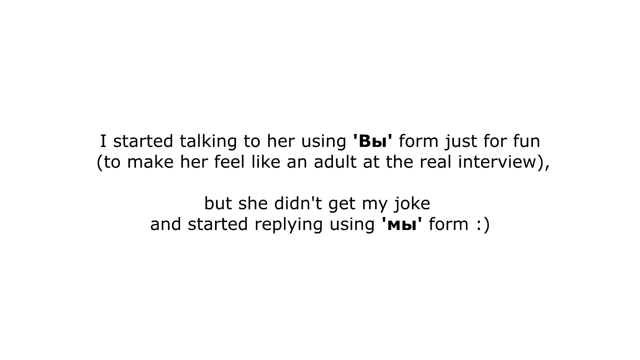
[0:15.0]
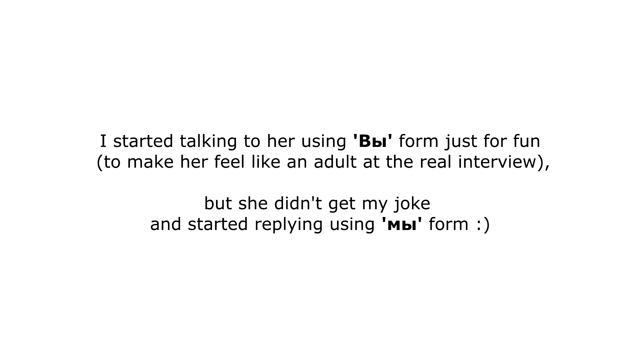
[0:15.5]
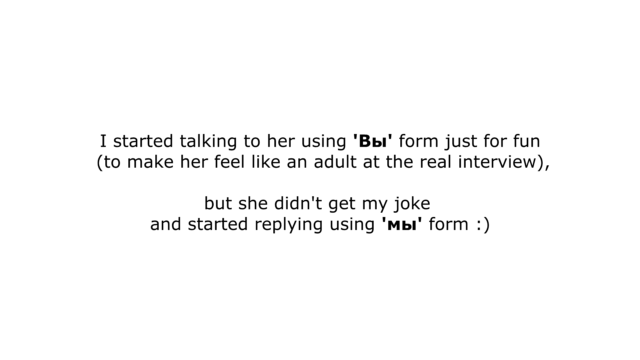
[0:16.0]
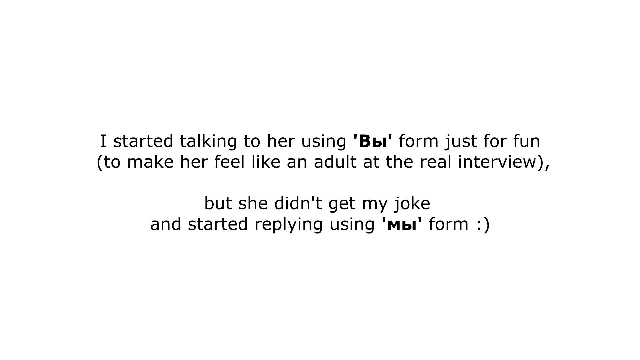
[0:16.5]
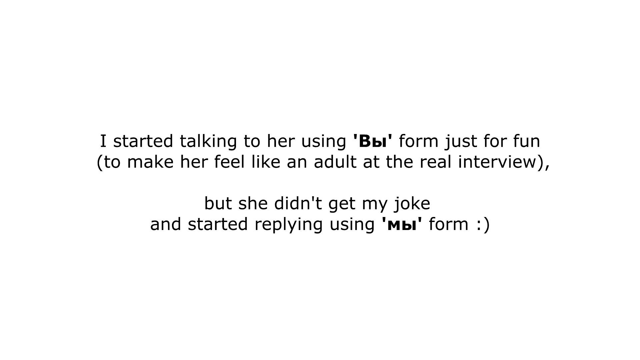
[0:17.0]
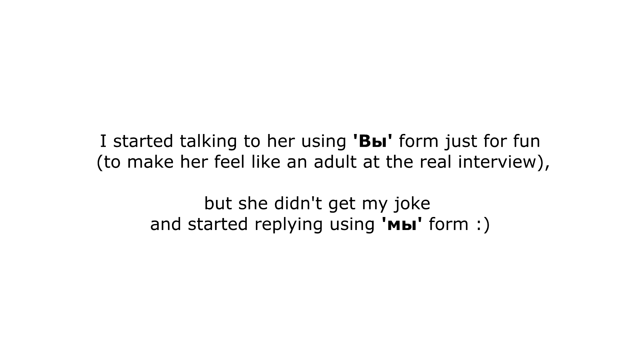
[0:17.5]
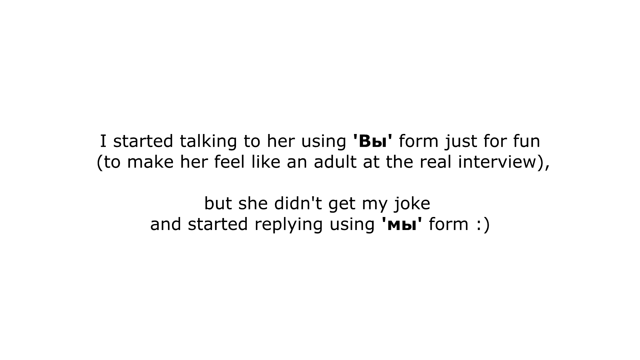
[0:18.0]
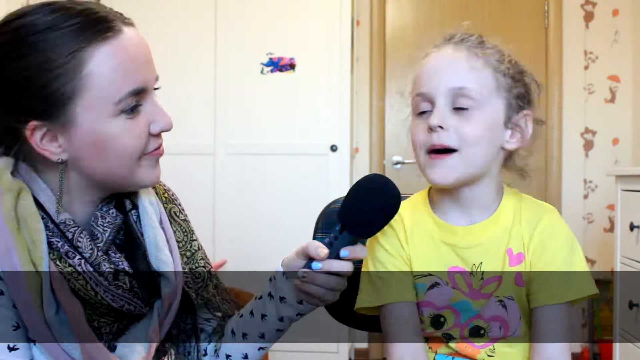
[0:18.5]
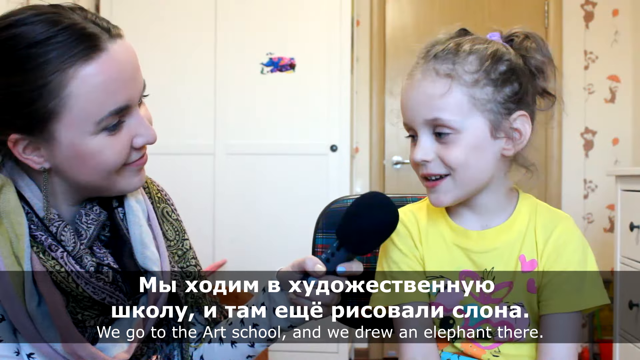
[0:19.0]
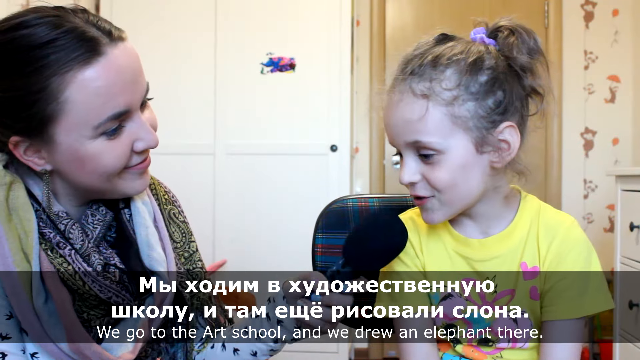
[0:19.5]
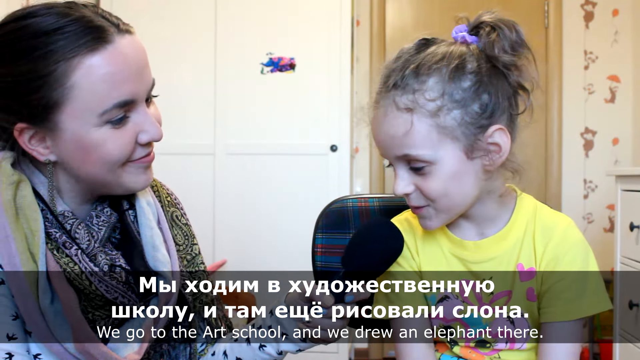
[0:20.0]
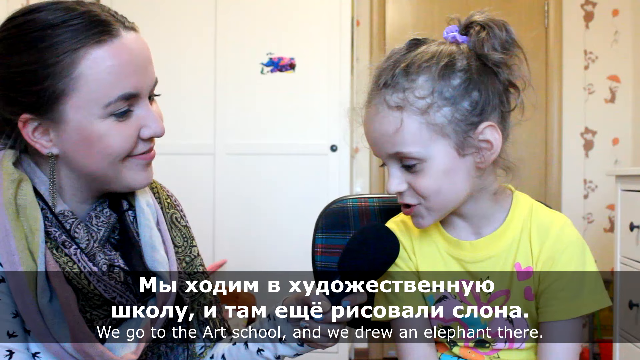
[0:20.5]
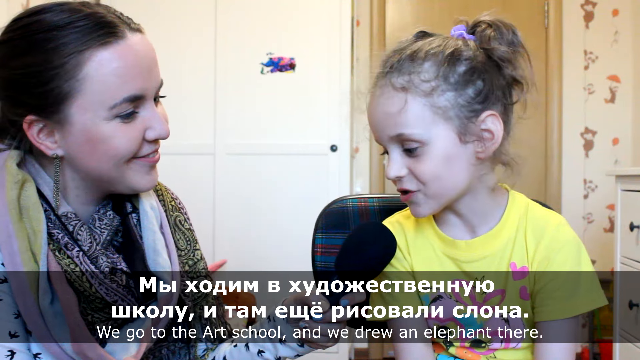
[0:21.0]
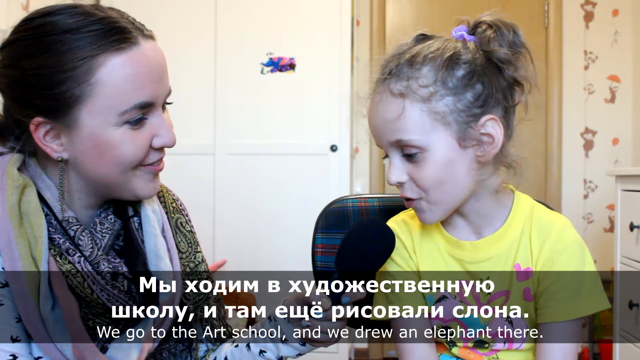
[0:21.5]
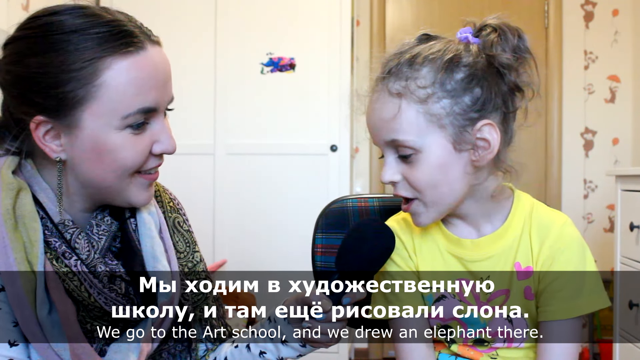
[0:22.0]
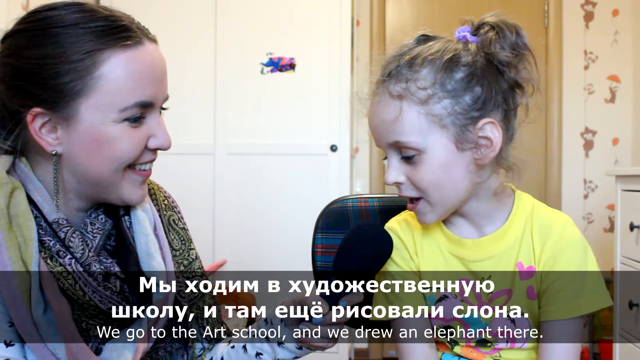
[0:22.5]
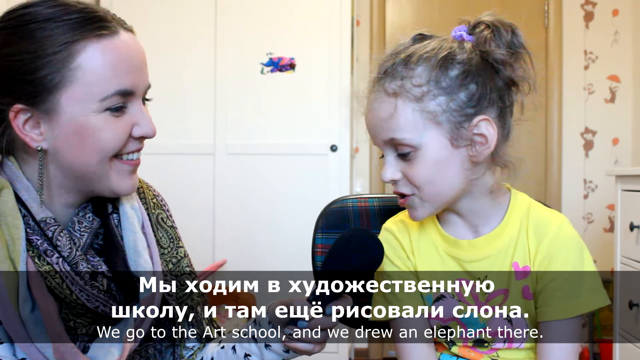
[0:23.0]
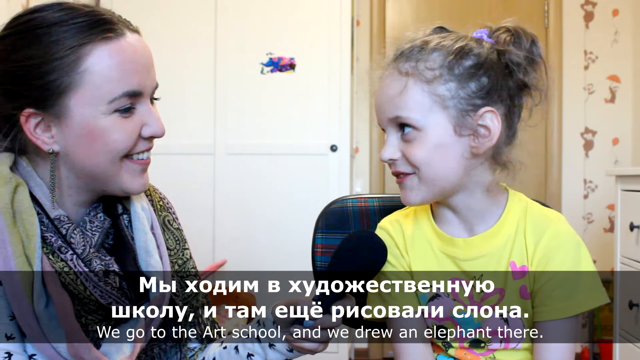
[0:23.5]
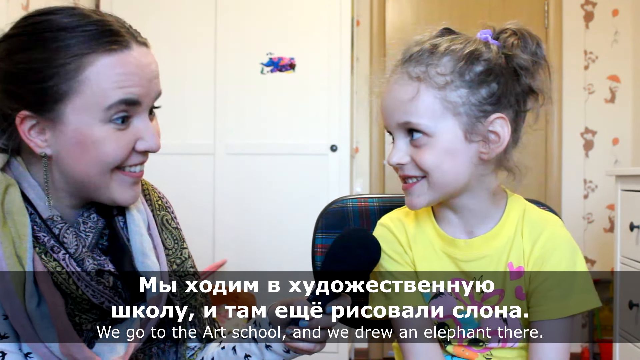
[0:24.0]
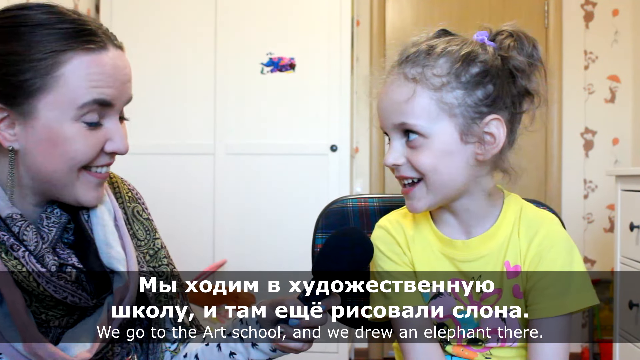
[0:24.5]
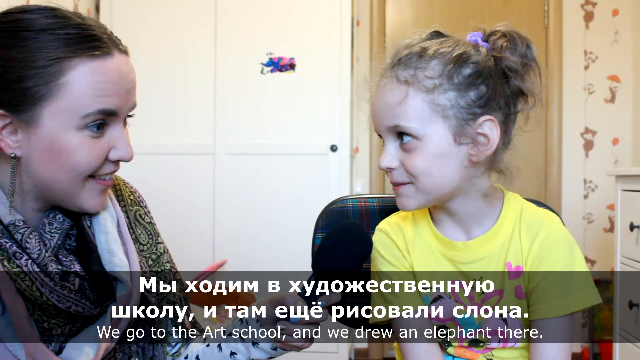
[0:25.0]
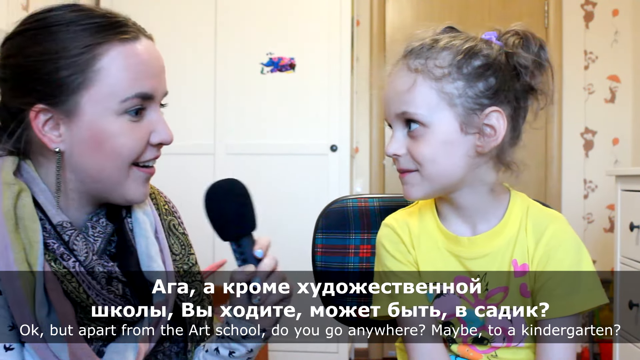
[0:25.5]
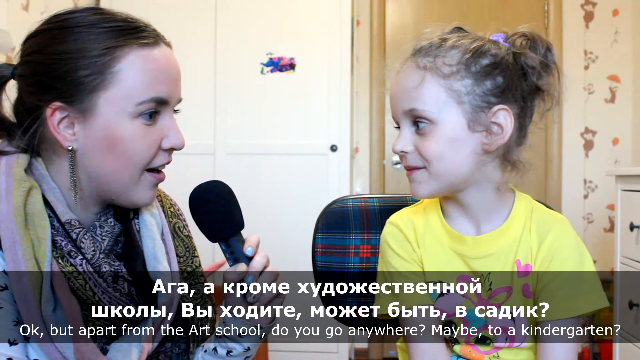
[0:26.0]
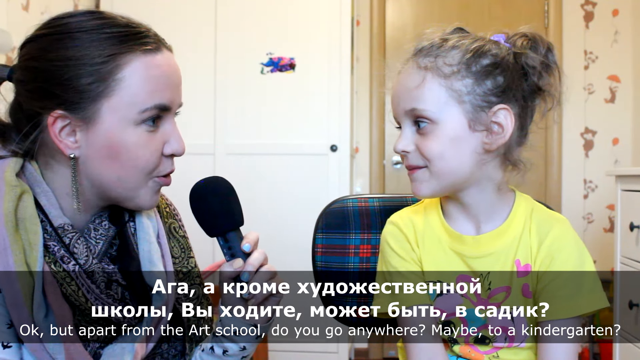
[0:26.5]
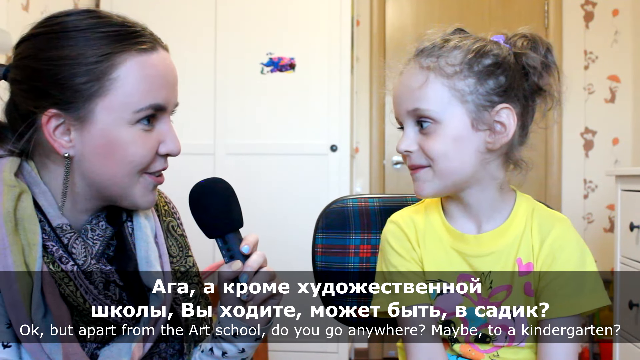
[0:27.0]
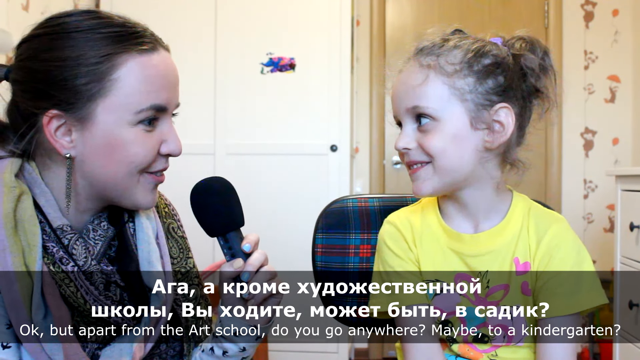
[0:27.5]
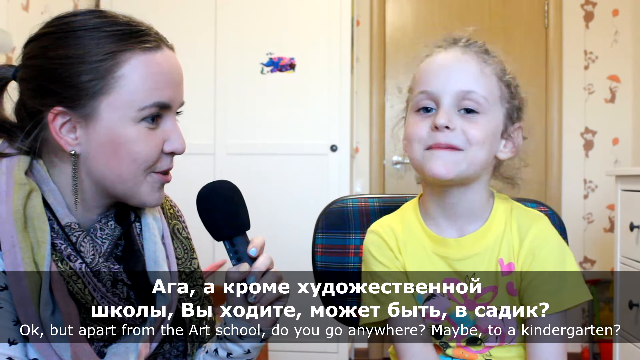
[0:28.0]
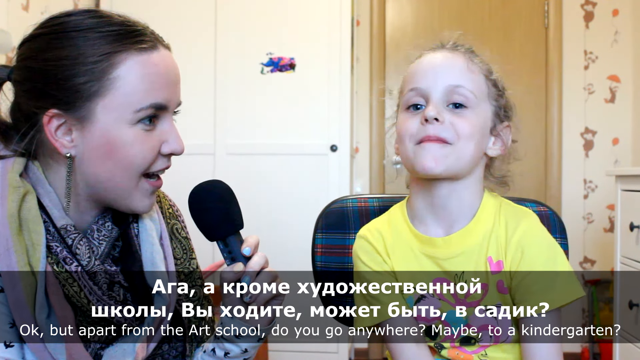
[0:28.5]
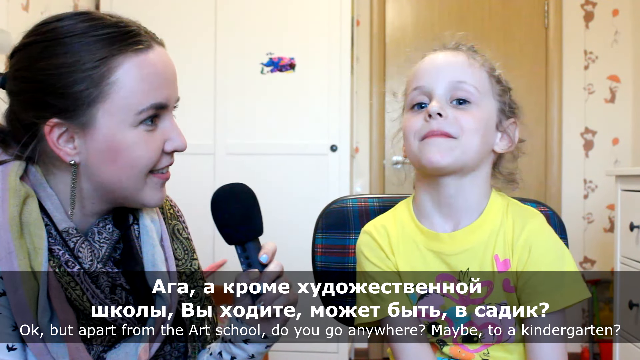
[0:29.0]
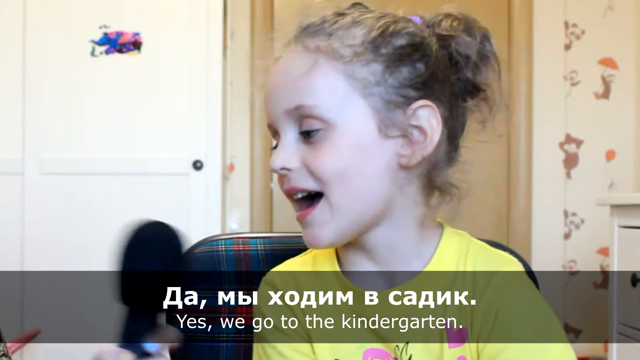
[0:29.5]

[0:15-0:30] The interview between the woman and the girl, who looks about five, continues. It opens with a white background bearing explanatory text saying that the woman started talking to the girl using a specific form of language, apparently a Russian form, to make her feel like an adult, but the girl answered in a different form; according to the text, the woman was joking with this form and the girl did not get it. The woman, holding a microphone, is playfully interviewing the girl, and both smile and laugh; the girl looks like she is having a great time. A black banner across the bottom shows the transcript in Russian above and the English translation below. The woman asks where the girl went to school, and the girl says she went to art school and drew an elephant. The woman asks about kindergarten, and the girl says, "yes, yes, I also go to kindergarten." Both look engaged and happy.